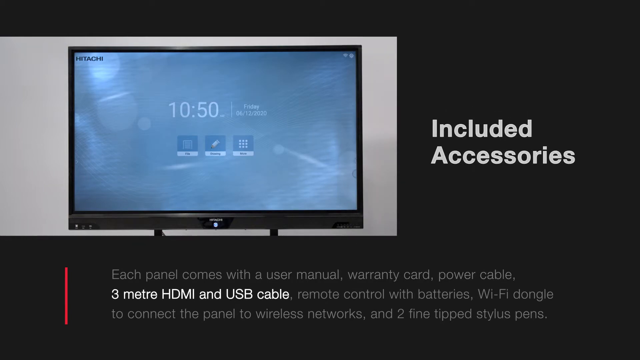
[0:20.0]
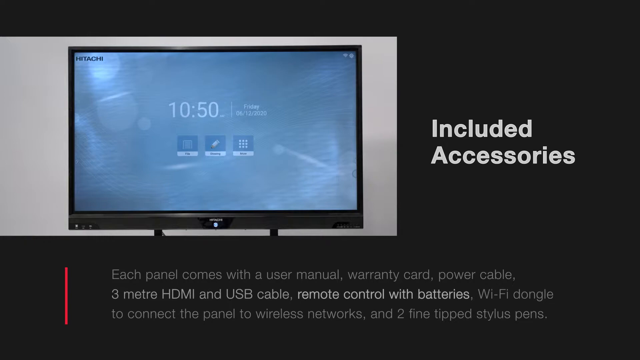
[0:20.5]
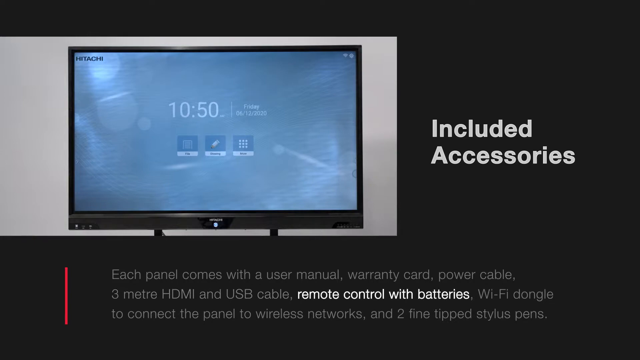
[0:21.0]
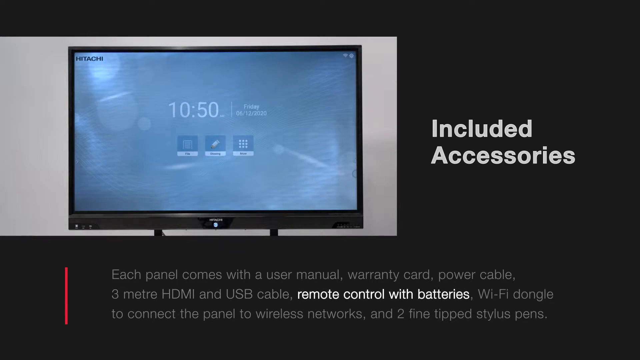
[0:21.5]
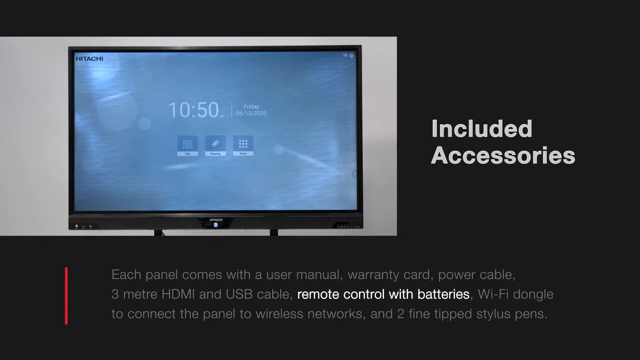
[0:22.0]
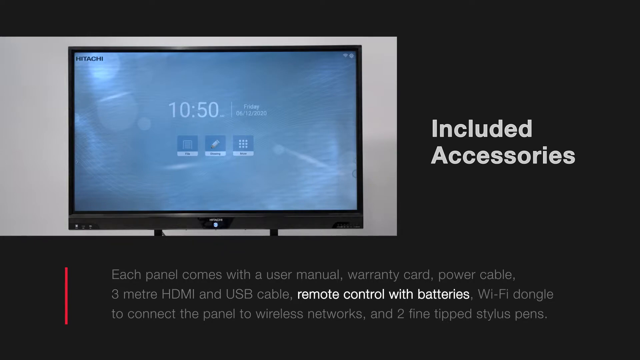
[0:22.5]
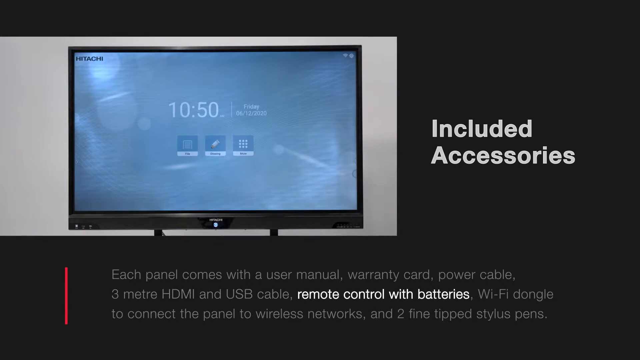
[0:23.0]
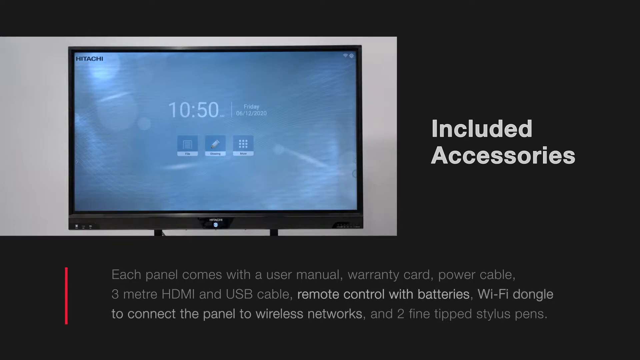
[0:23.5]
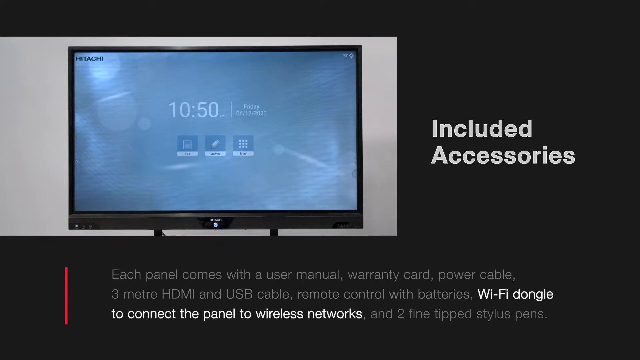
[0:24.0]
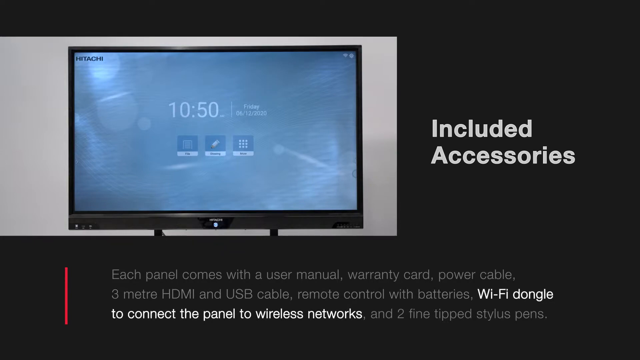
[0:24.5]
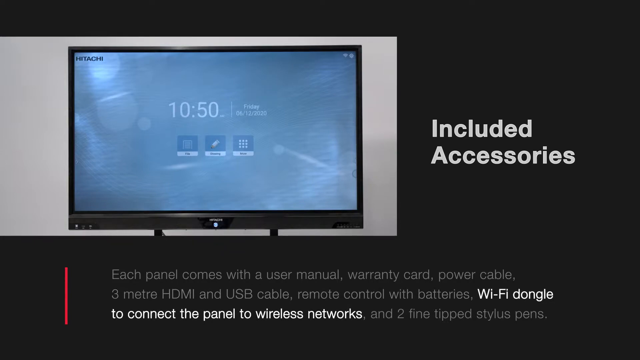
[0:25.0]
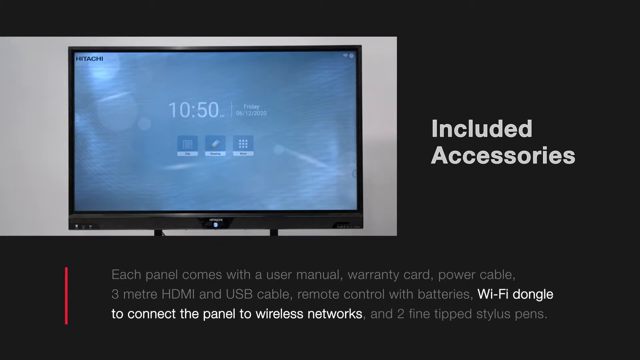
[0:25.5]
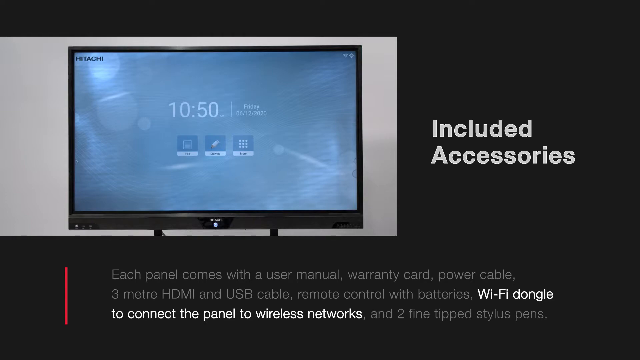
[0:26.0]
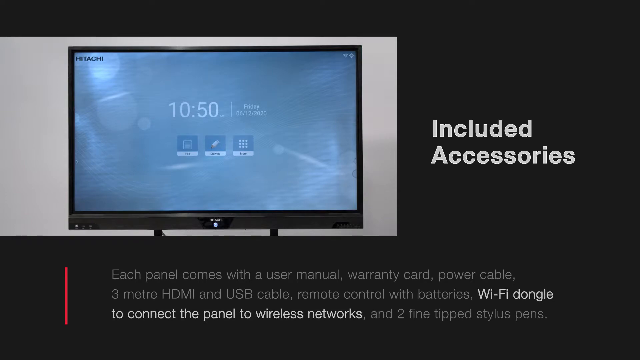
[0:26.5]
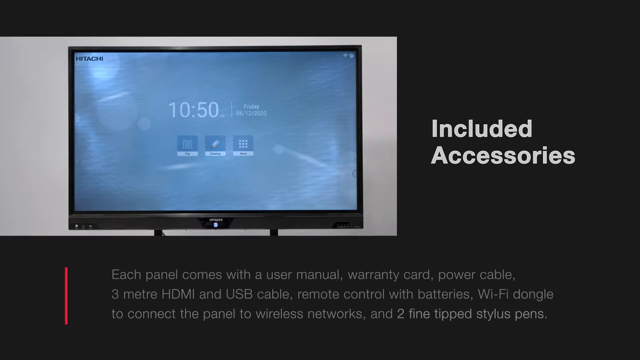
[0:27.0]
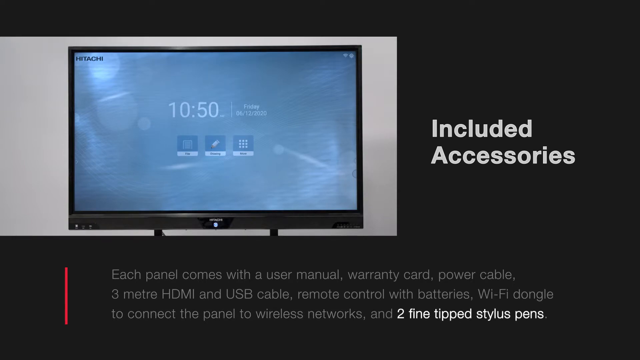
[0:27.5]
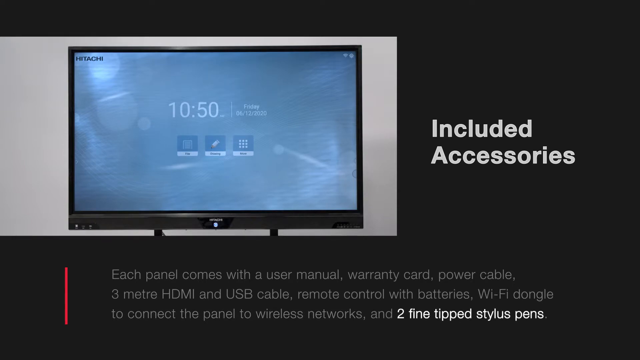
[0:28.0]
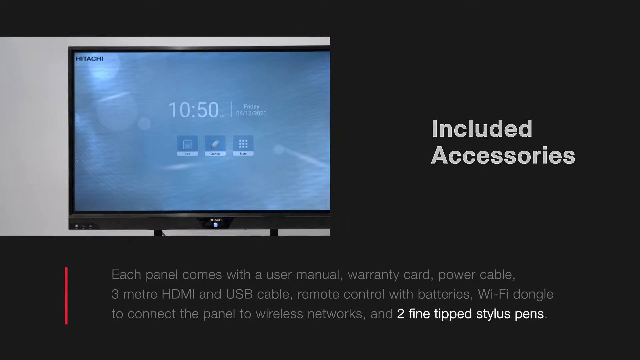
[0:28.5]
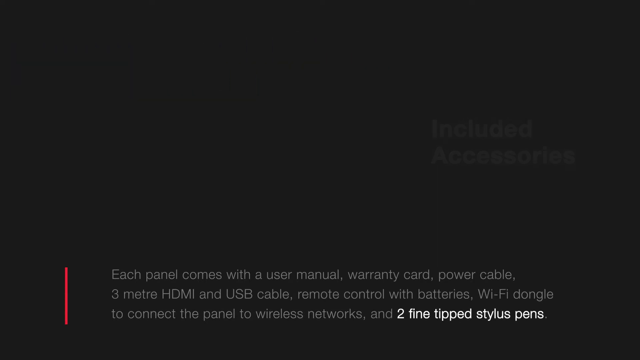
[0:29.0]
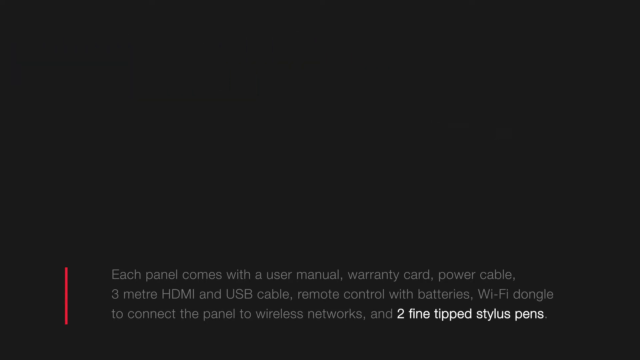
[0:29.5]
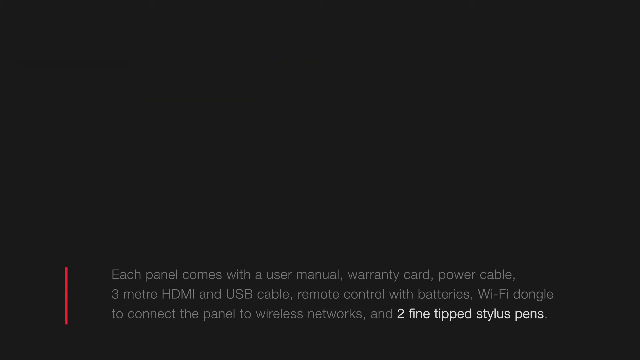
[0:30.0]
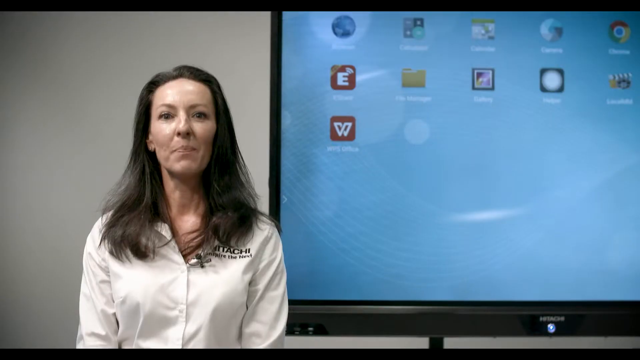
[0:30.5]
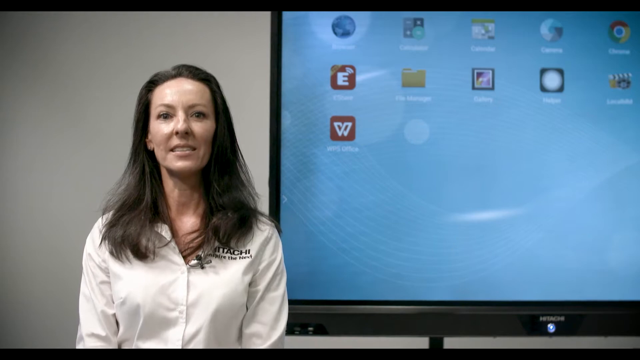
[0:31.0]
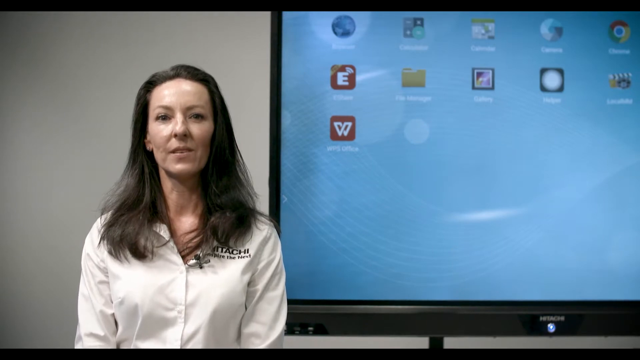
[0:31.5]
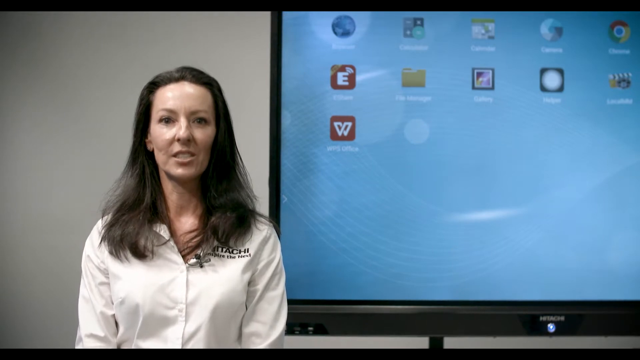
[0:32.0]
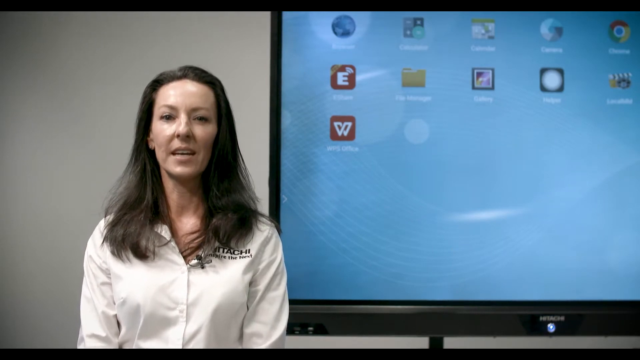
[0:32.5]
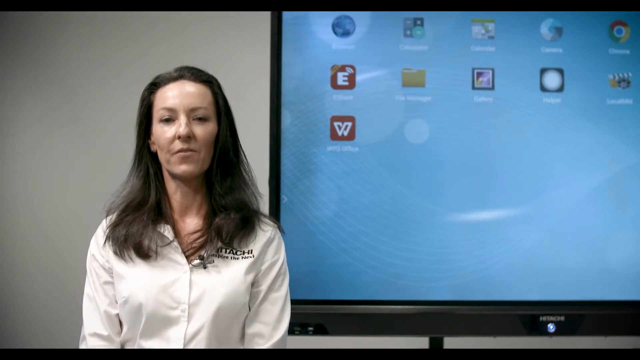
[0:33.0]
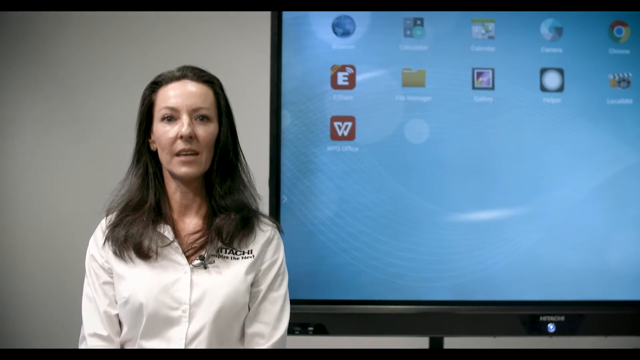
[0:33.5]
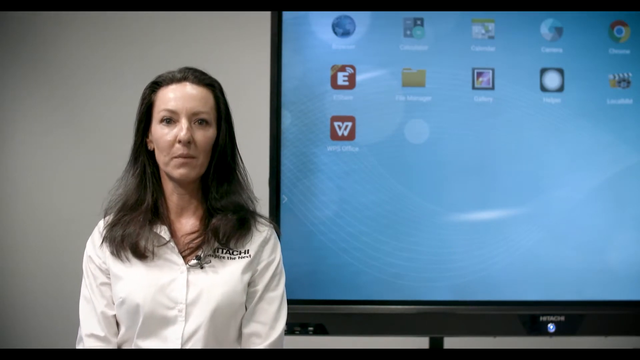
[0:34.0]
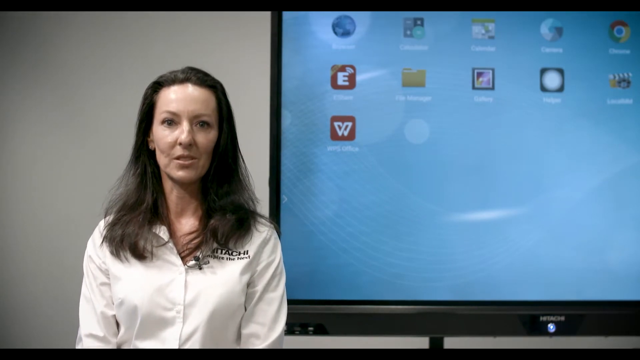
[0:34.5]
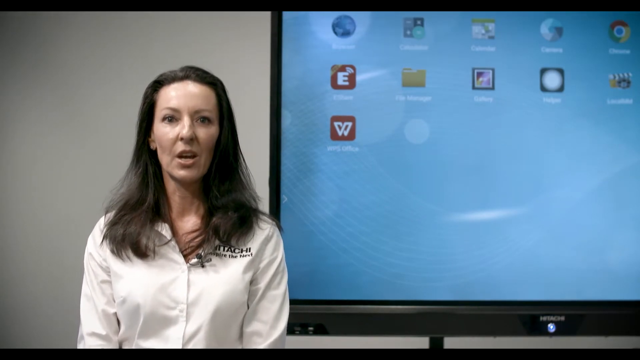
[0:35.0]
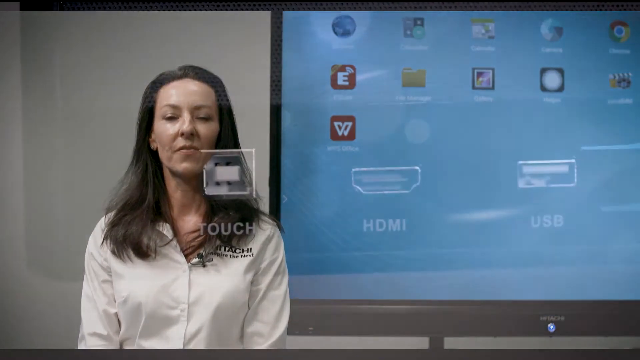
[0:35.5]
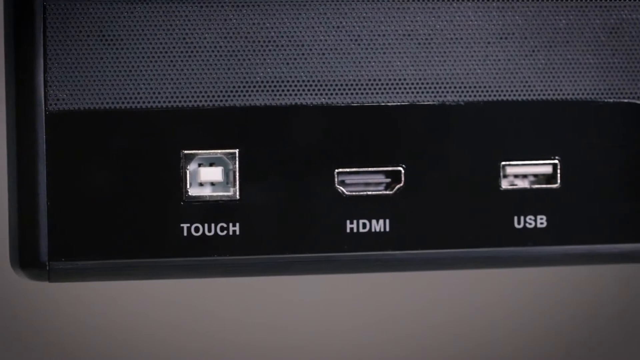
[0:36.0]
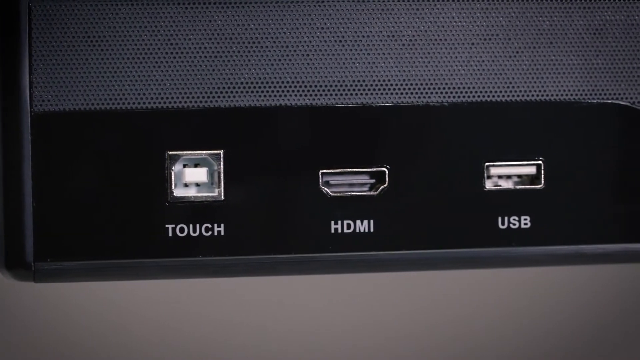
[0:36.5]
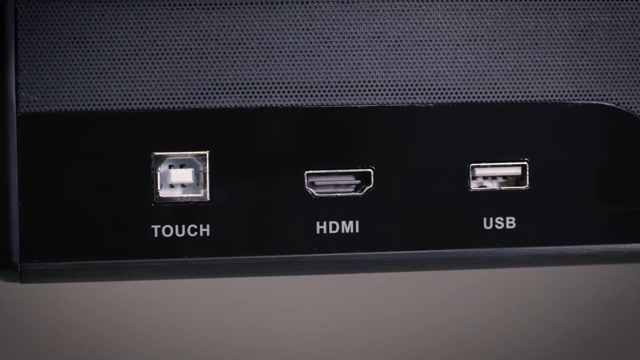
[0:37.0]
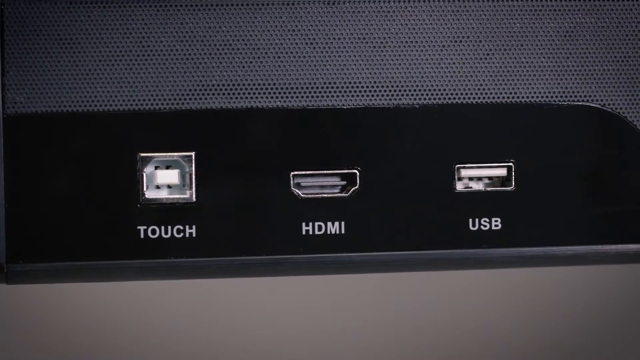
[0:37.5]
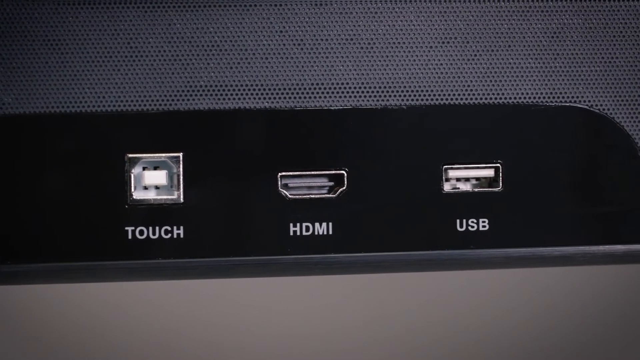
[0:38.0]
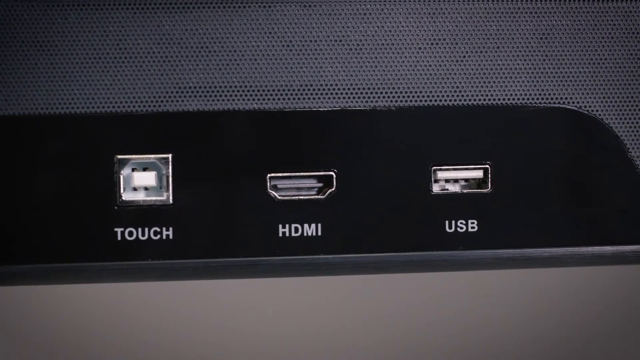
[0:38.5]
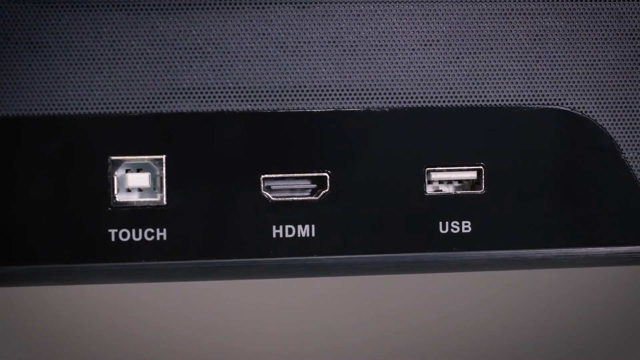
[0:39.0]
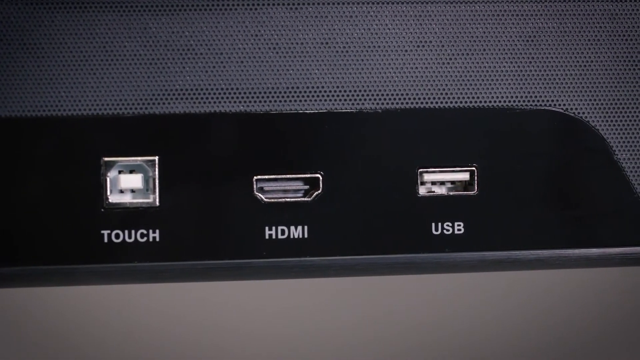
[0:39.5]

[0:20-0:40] The white woman, apparently a company representative, addresses the ports, which seem to include a touch port, an HDMI port and a USB port. The product is a big screen, more like a TV, made by Hitachi. The accessories it comes with are shown: the manual, the warranty card, the power cable, a 3-meter HDMI and USB cable, a remote control with 2 batteries, and a Wi-Fi dongle to connect the panel to wireless networks. The woman emphasizes the ports available on it, such as the USB port, the touch port, which is the Thunderbolt, and the HDMI port.